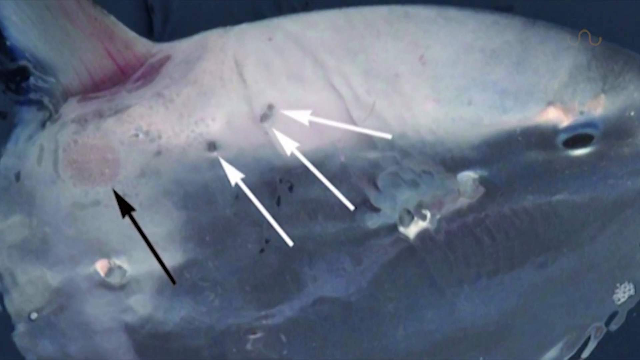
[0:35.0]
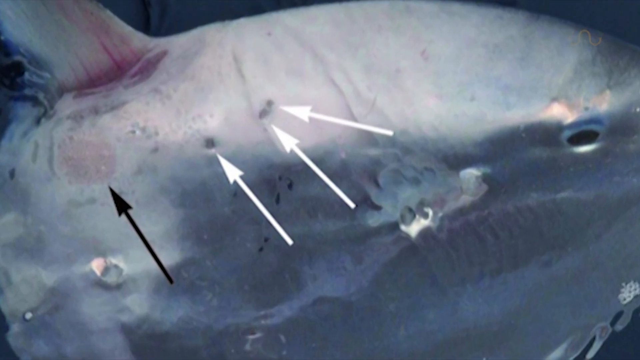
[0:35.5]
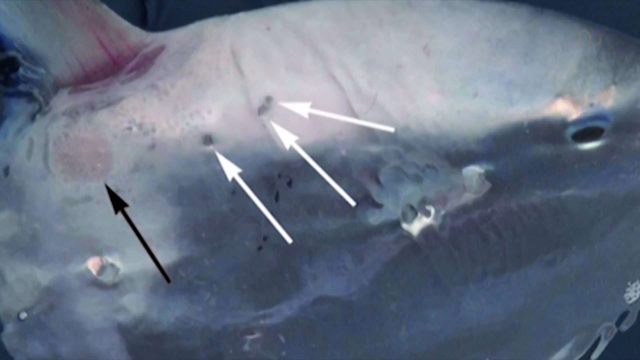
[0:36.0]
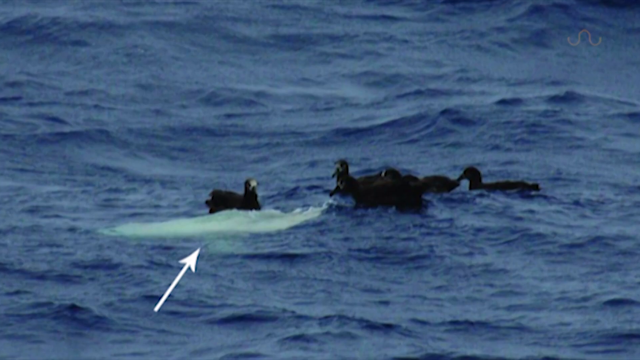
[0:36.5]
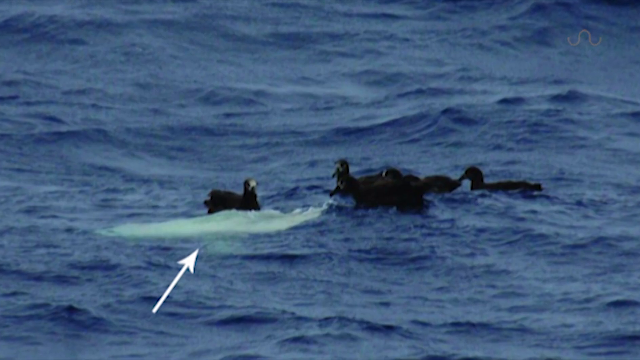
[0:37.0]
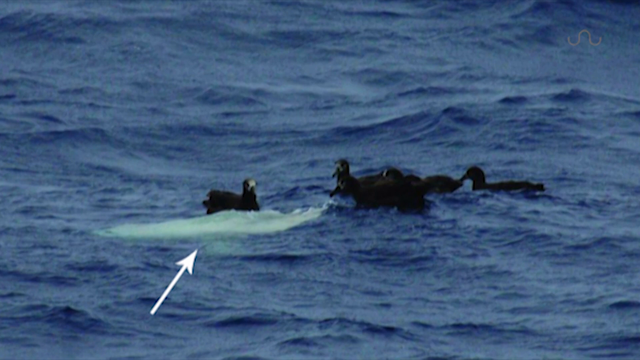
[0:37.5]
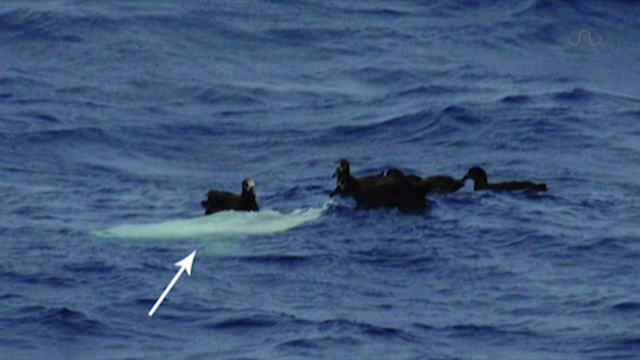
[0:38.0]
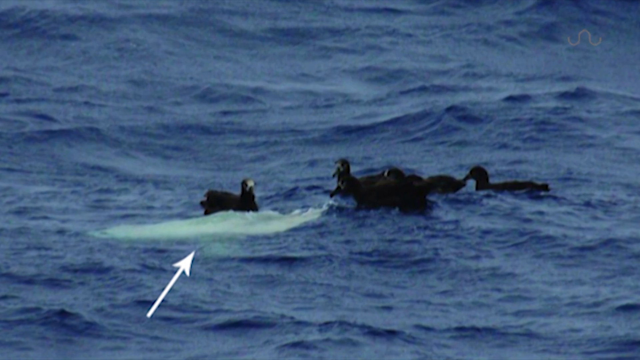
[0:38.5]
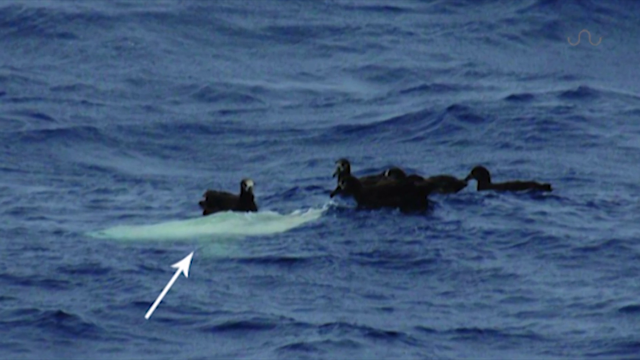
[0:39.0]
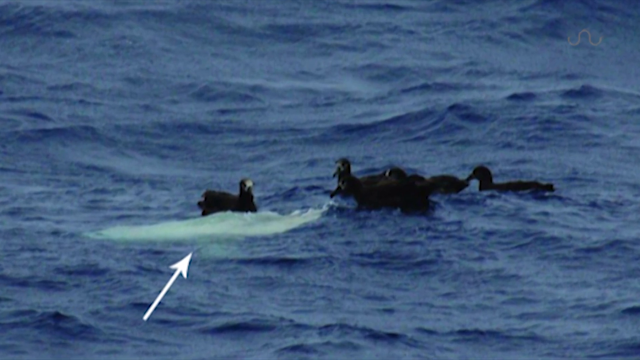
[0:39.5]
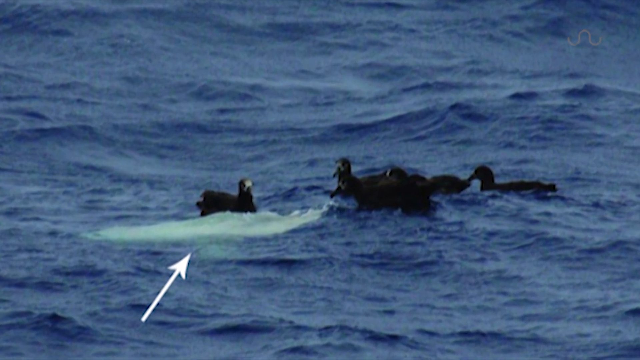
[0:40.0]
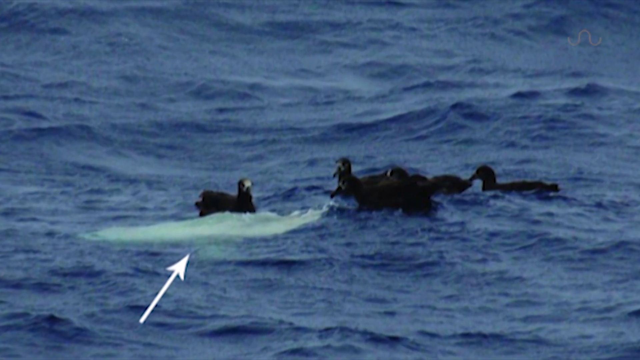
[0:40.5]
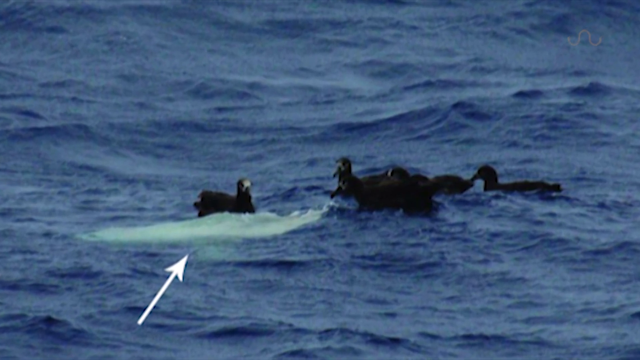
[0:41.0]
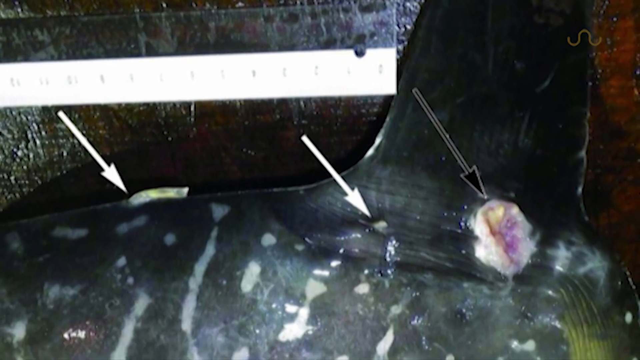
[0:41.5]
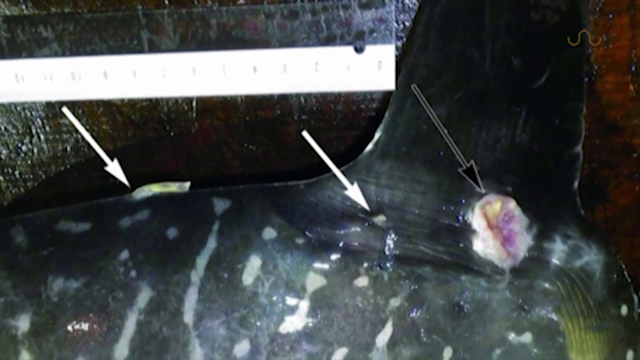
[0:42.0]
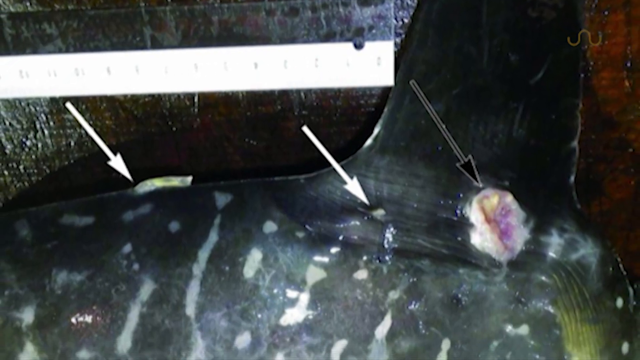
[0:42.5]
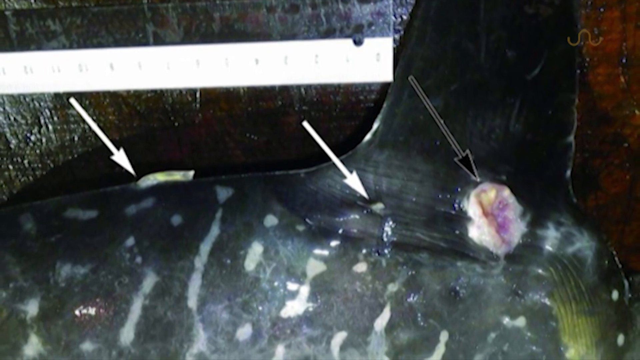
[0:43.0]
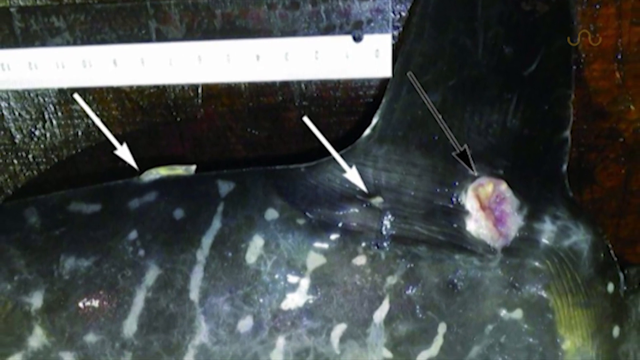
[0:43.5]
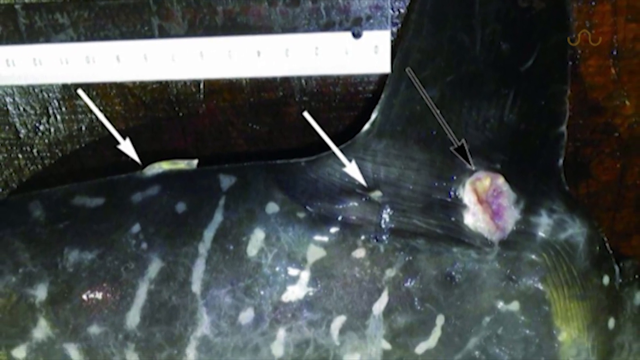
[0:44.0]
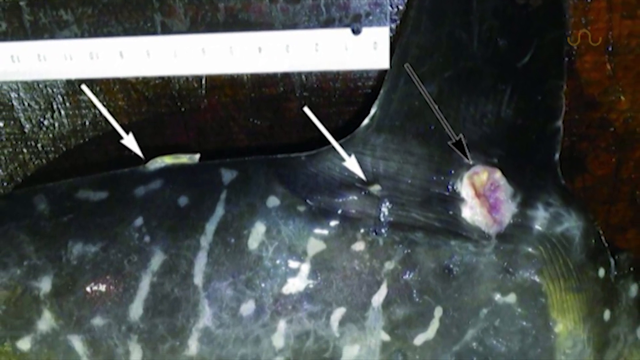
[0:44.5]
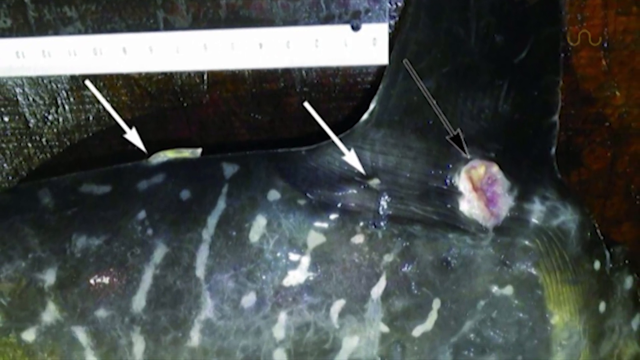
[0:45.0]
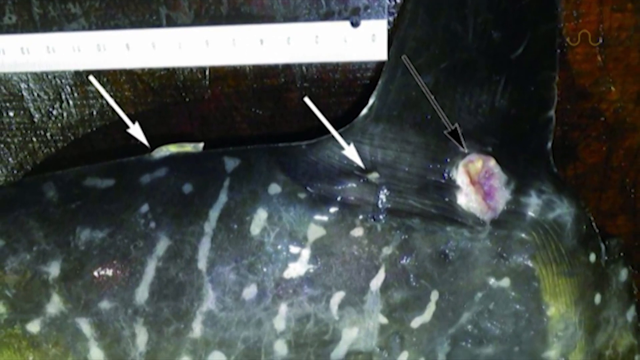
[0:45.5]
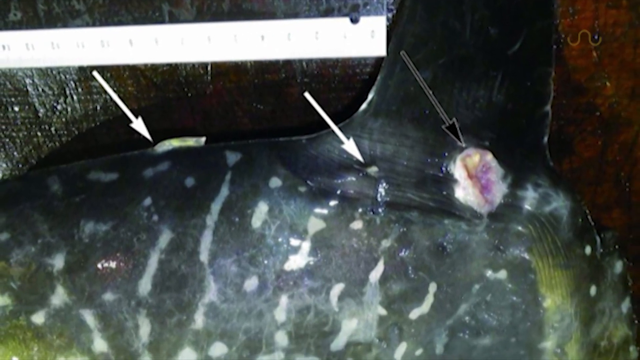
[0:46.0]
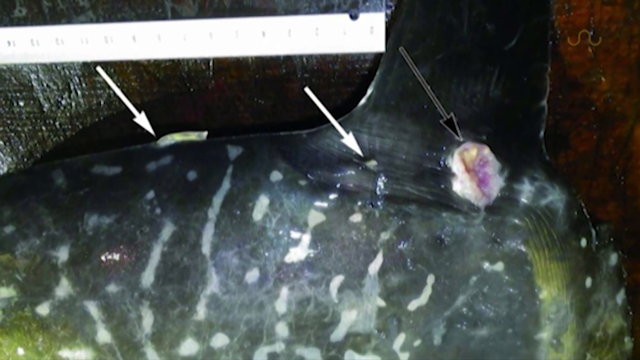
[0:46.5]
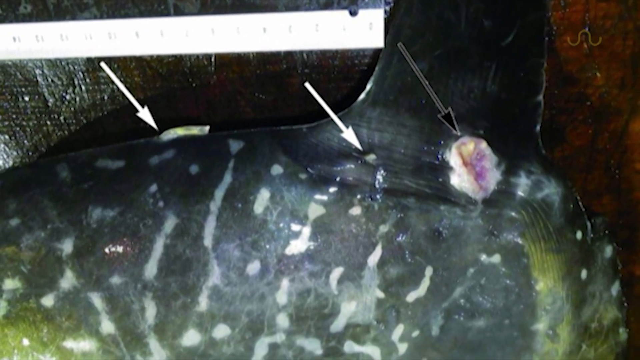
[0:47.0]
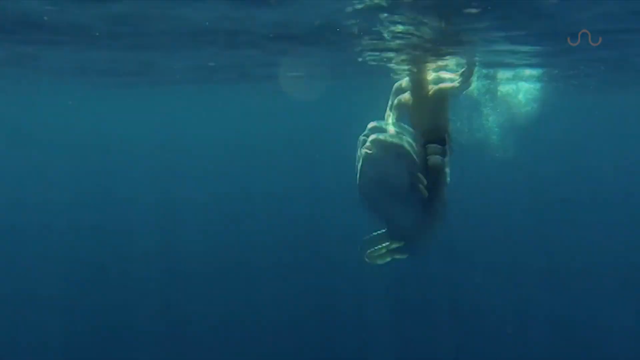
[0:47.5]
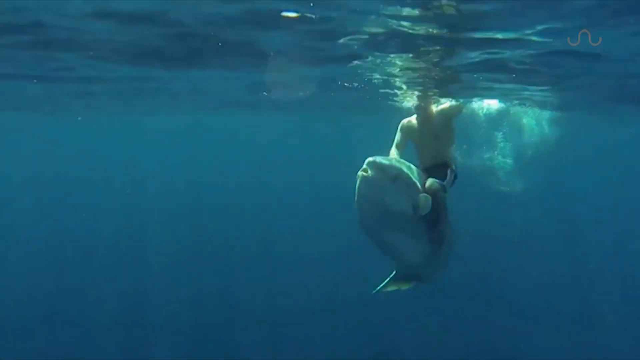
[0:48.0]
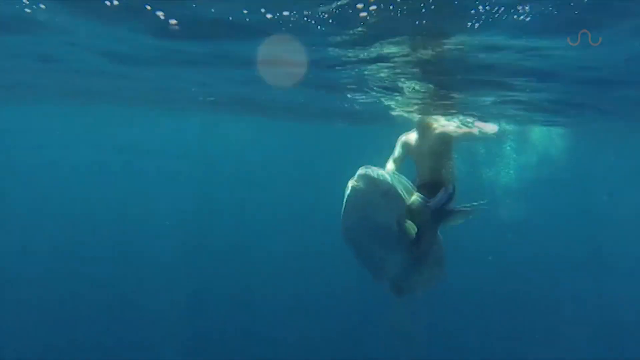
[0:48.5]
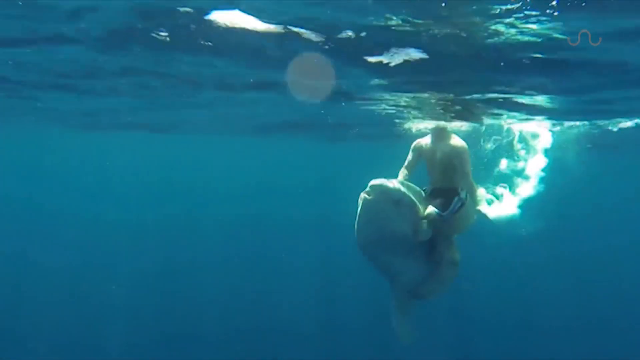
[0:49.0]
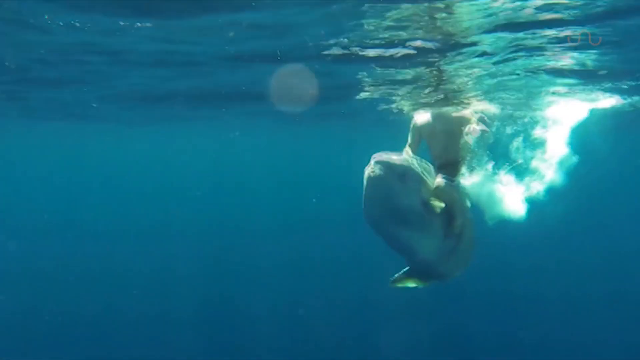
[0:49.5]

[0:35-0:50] Pictures of unusual animals are shown, including one that looks like the Loch Ness Monster and various sharks, among them a flatter one almost like a stingray. The scene then cuts to the ocean and to a person on a giant fish that kind of looks like Flounder. White arrows point at the fish, apparently at the spots on it.